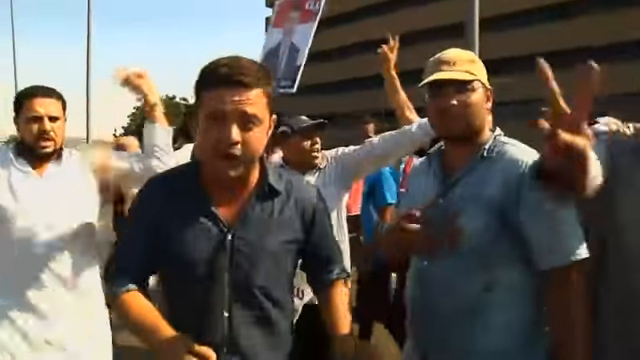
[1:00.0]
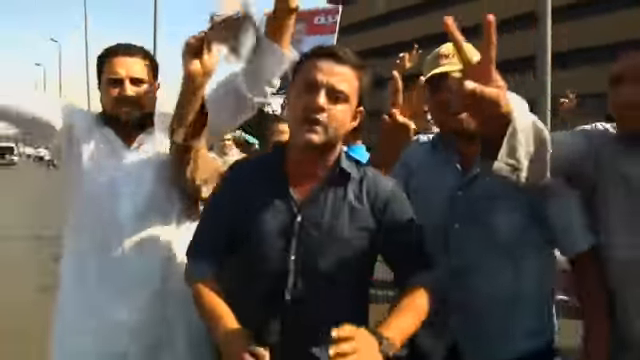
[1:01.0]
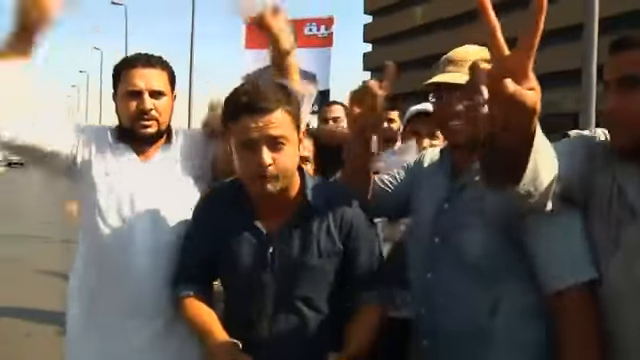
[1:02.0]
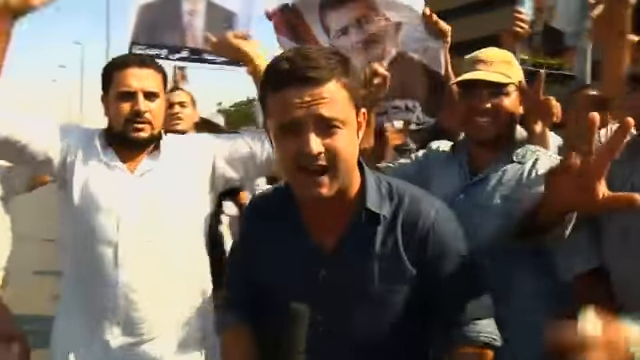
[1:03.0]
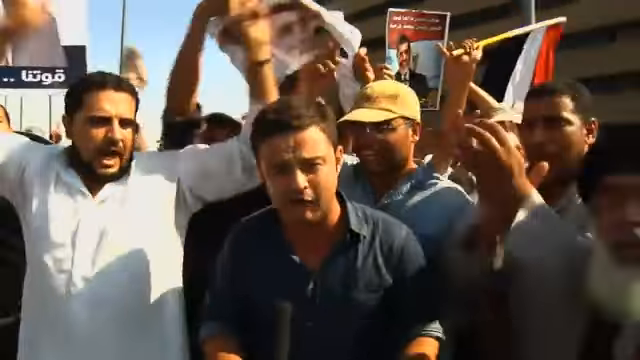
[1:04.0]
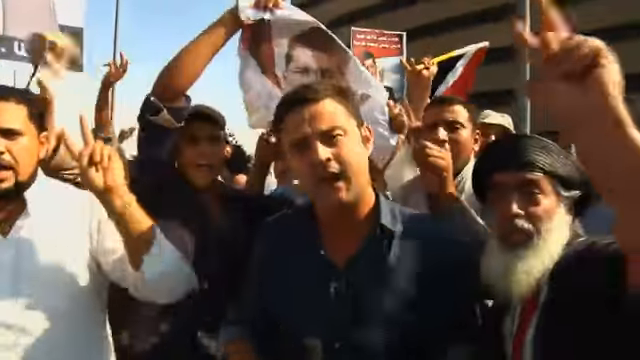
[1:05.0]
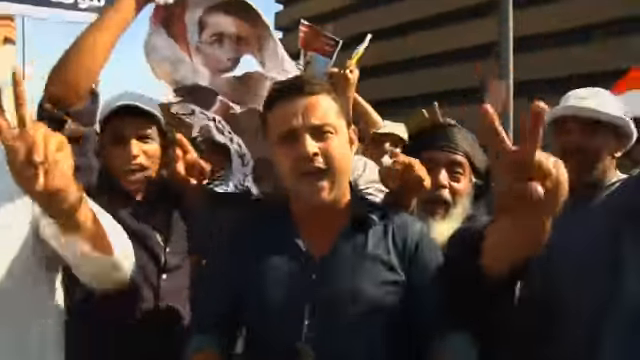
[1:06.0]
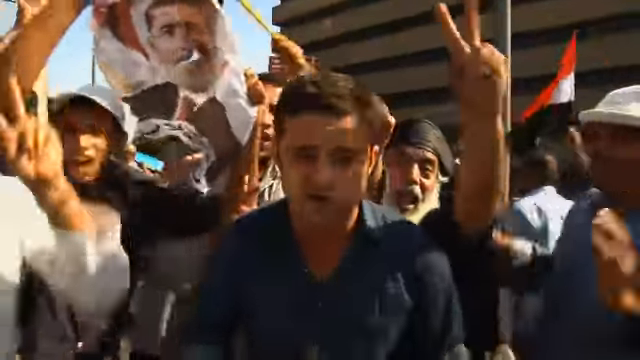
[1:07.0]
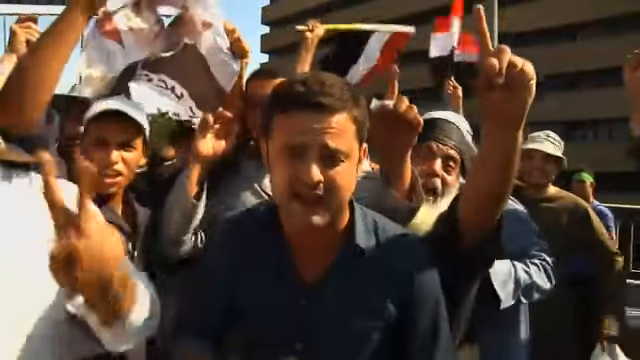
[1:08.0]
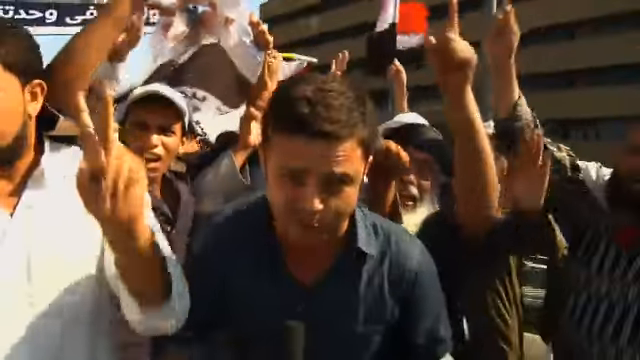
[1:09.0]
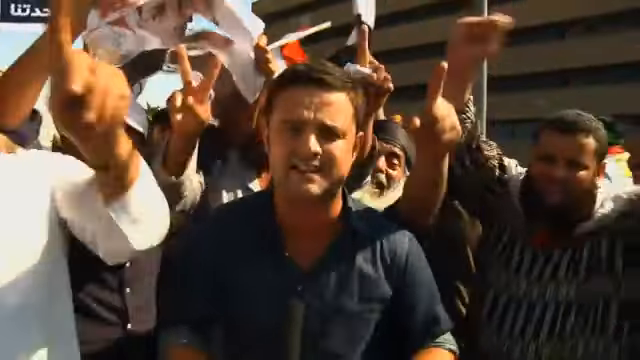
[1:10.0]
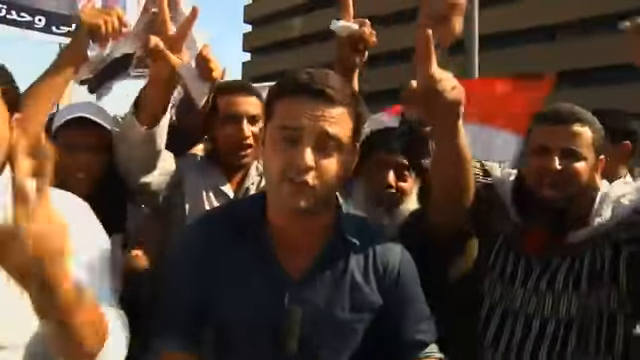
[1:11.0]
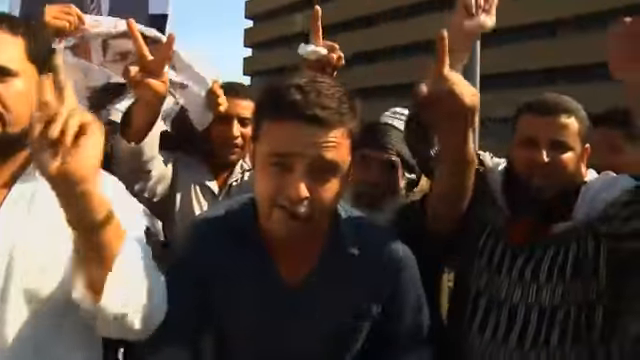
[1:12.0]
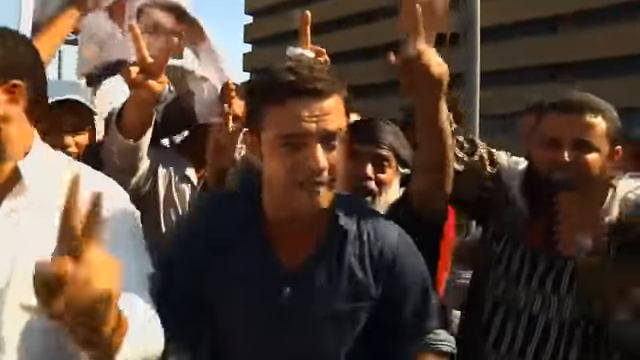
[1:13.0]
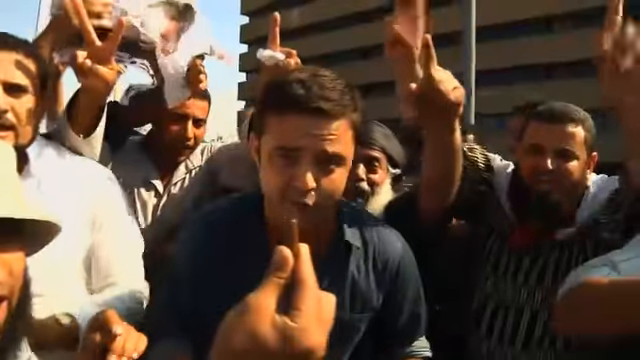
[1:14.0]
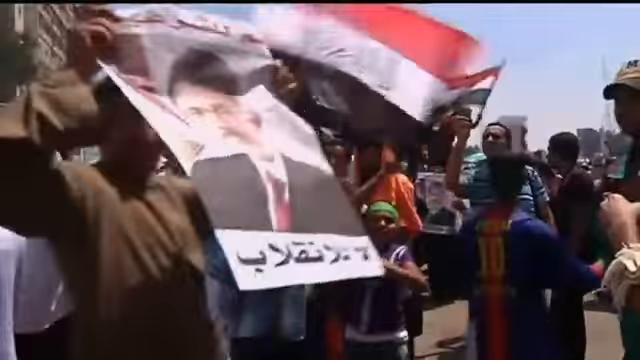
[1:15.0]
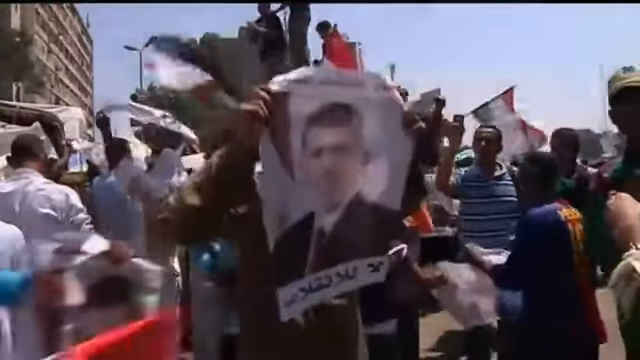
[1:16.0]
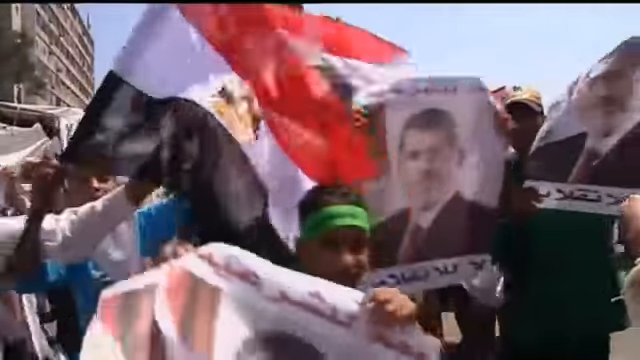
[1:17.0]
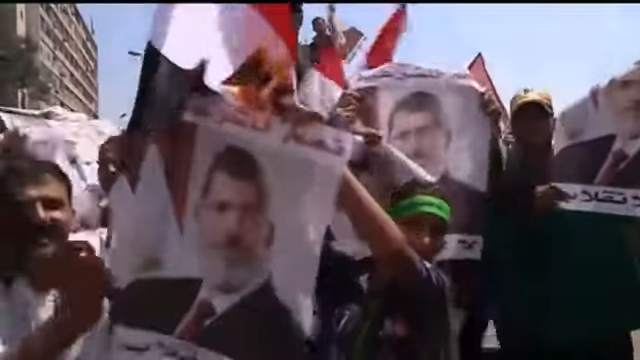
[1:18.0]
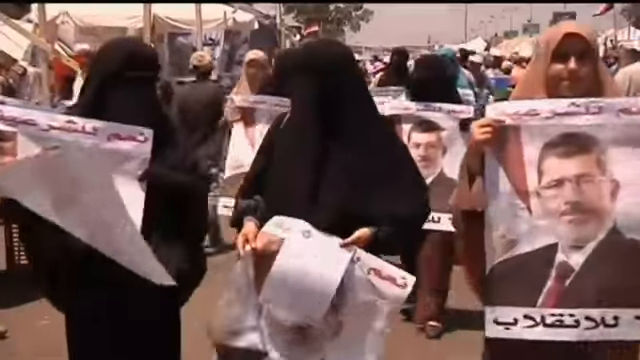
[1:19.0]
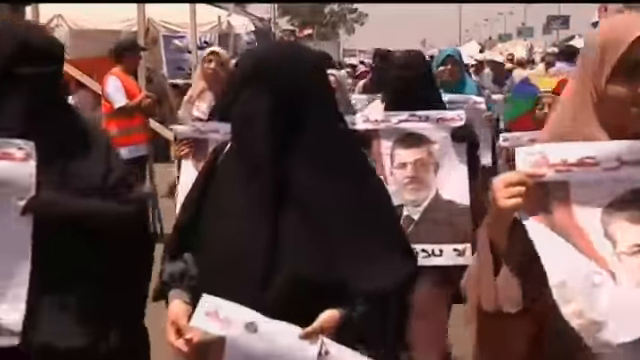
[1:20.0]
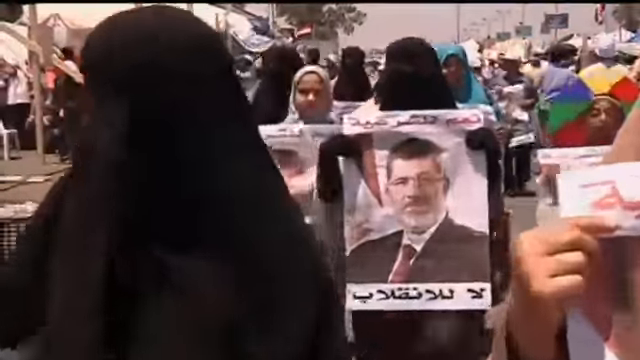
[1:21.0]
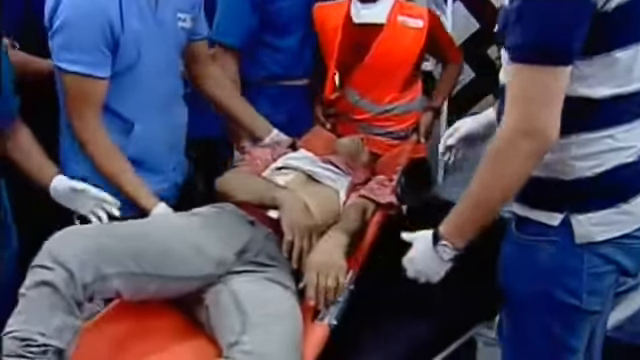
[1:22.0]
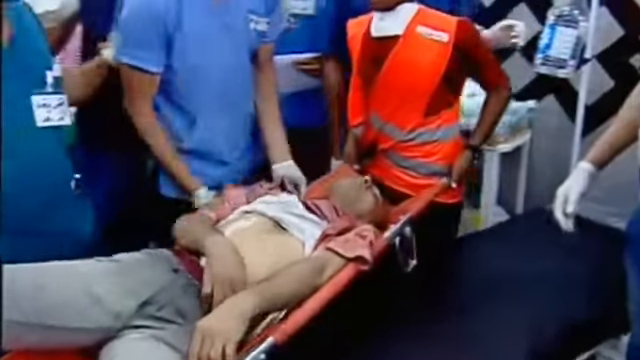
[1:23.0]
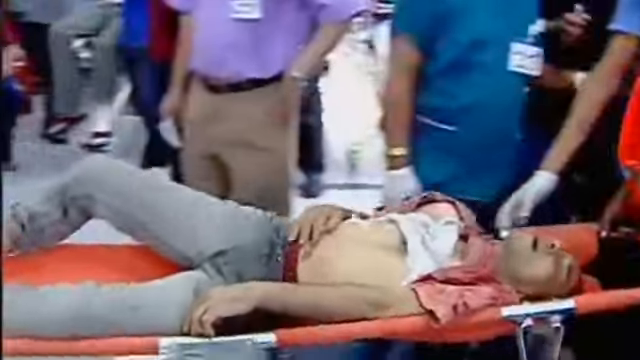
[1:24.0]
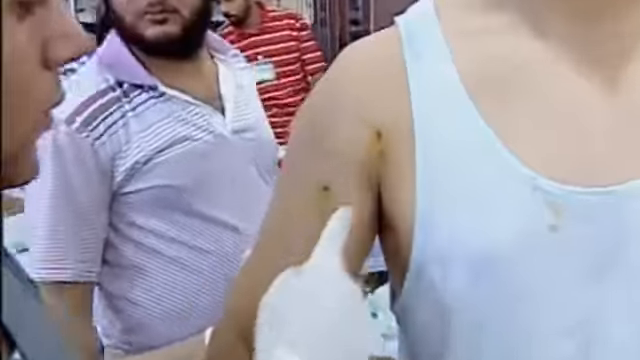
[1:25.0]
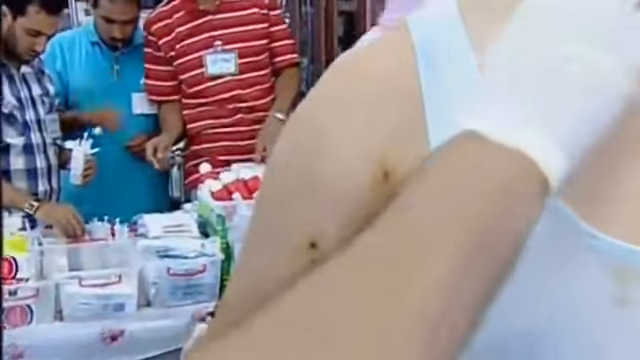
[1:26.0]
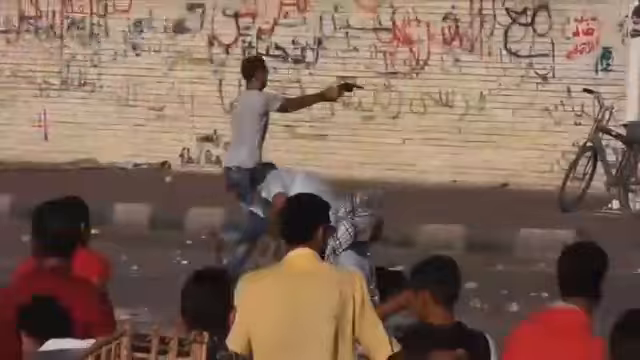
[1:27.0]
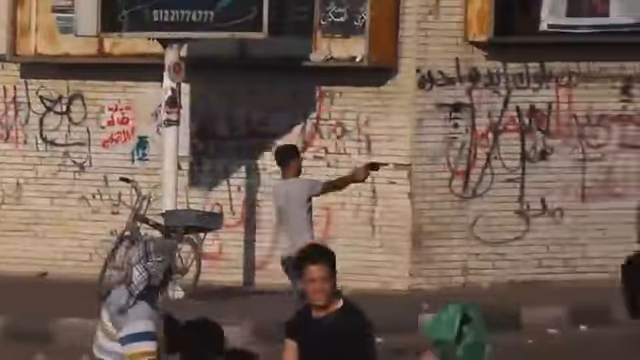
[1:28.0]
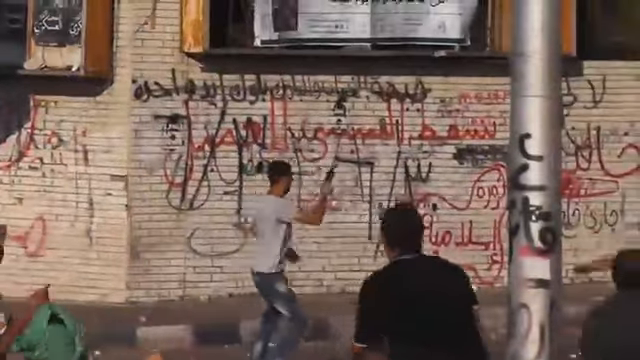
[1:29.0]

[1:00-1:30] A reporter appears to be reporting on the events. Egyptians wave flags and pictures of the man, looking happy. Women now appear in the crowd. There are also casualties: a young man is put on a stretcher, apparently by a paramedic team, and a medical team on standby administers medication. A young man with a gun is shooting in public.